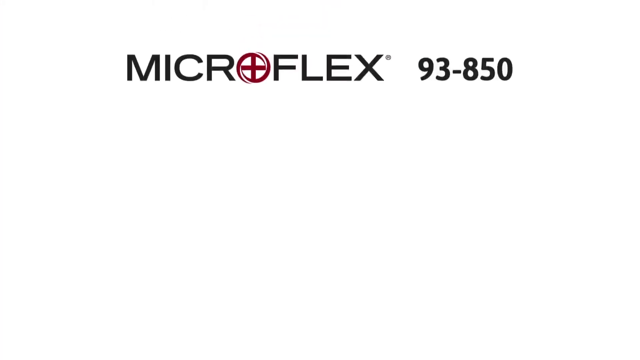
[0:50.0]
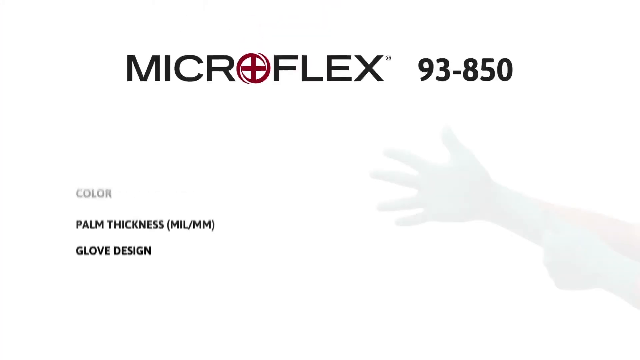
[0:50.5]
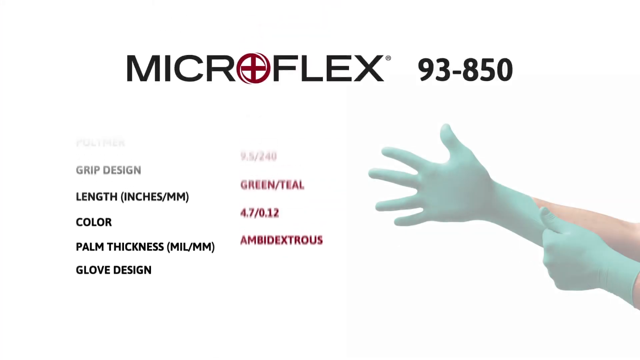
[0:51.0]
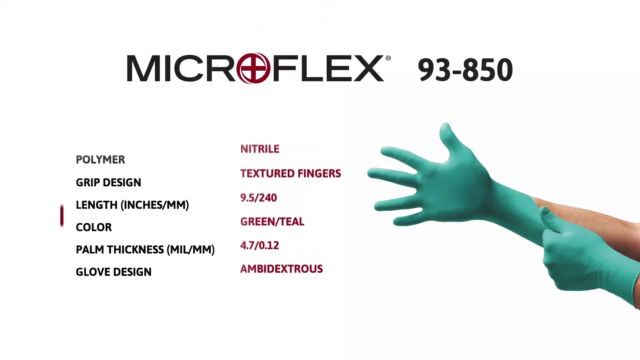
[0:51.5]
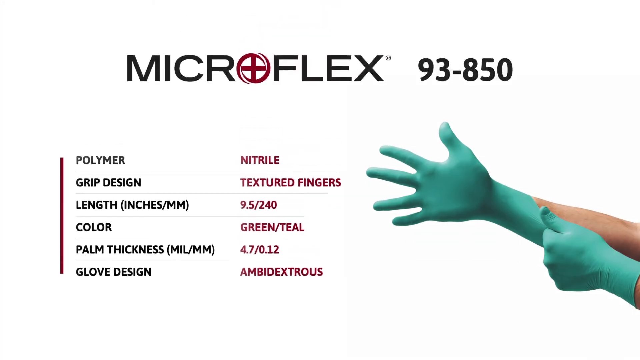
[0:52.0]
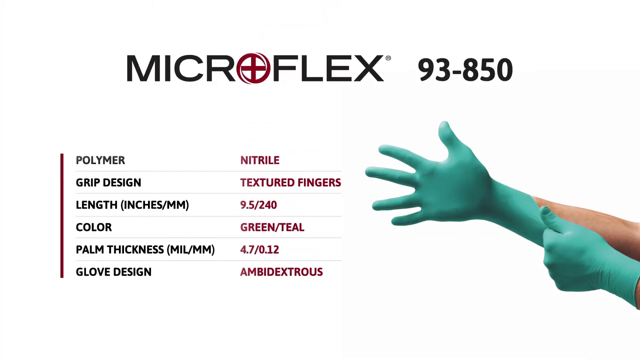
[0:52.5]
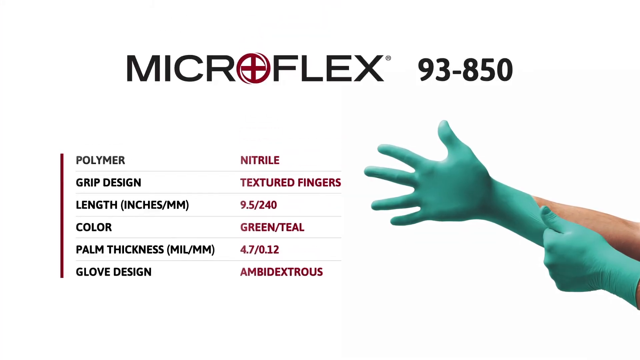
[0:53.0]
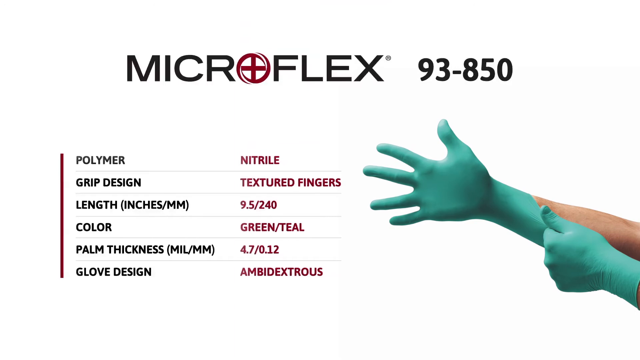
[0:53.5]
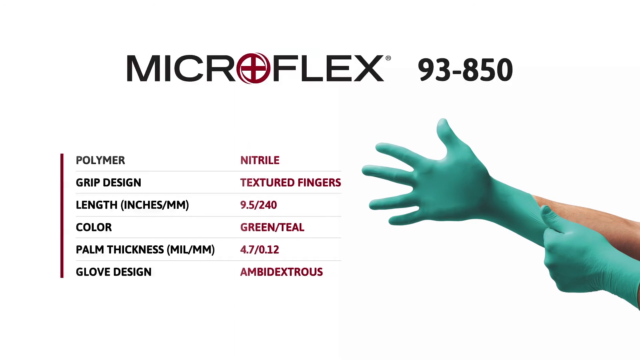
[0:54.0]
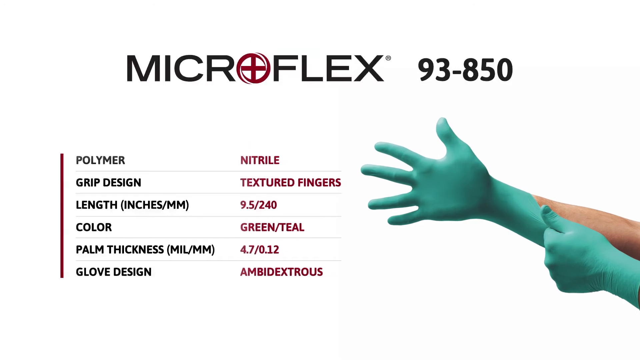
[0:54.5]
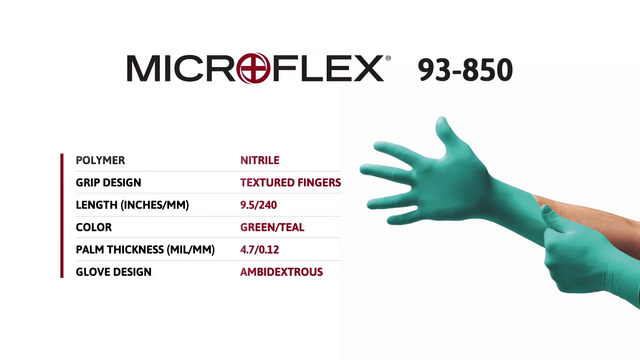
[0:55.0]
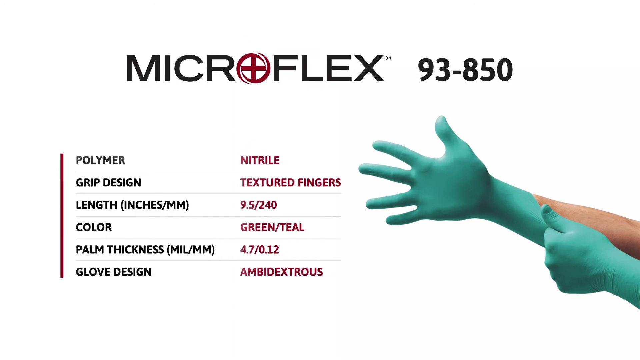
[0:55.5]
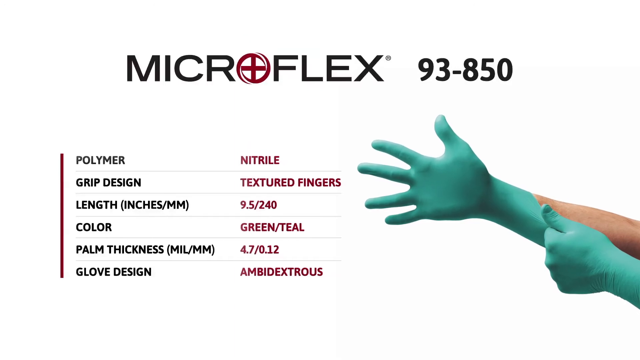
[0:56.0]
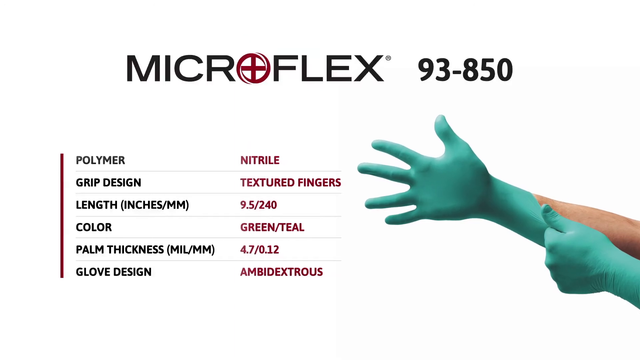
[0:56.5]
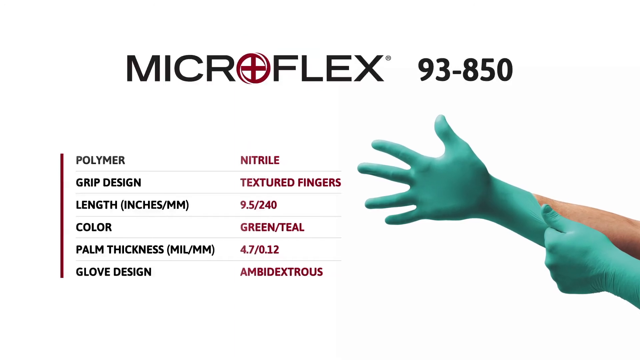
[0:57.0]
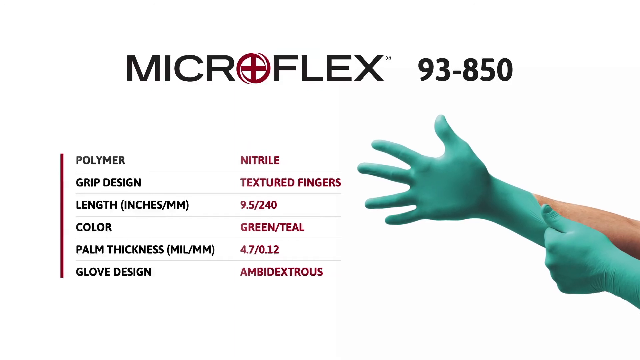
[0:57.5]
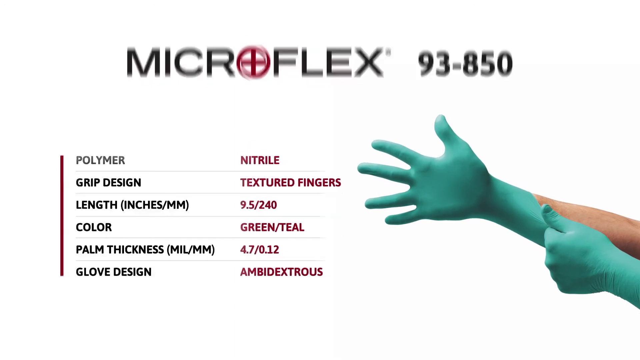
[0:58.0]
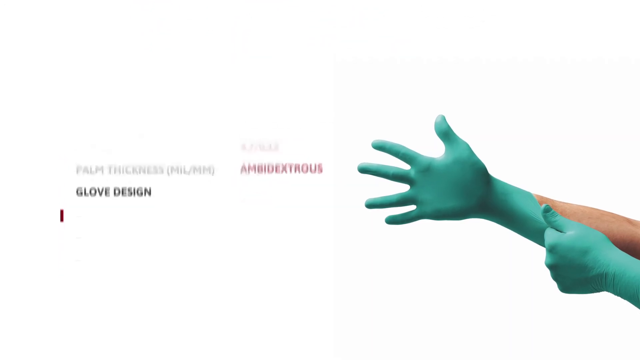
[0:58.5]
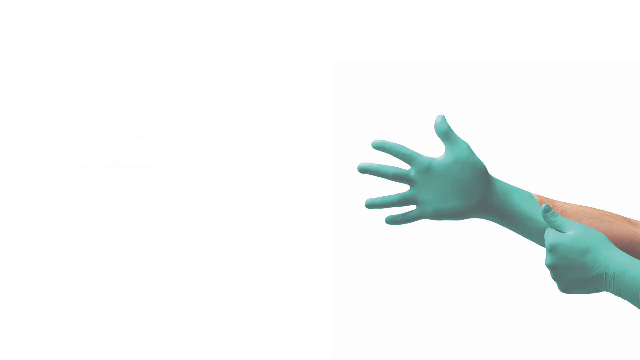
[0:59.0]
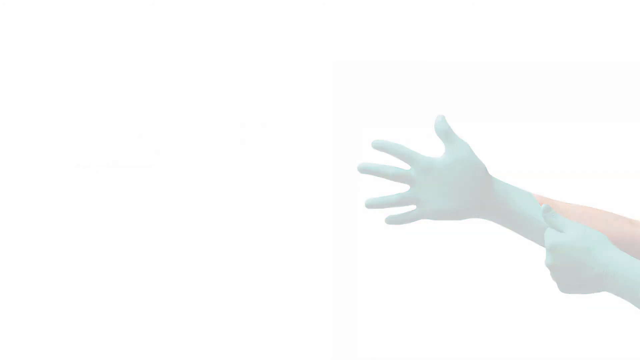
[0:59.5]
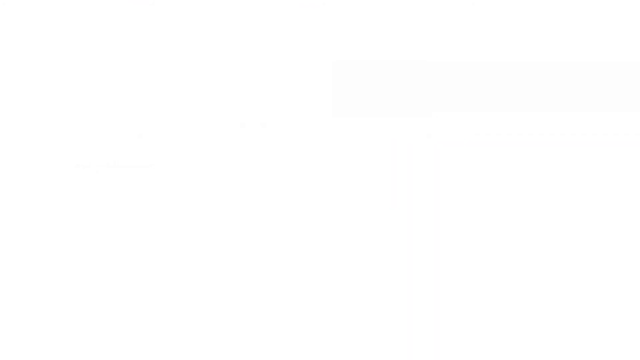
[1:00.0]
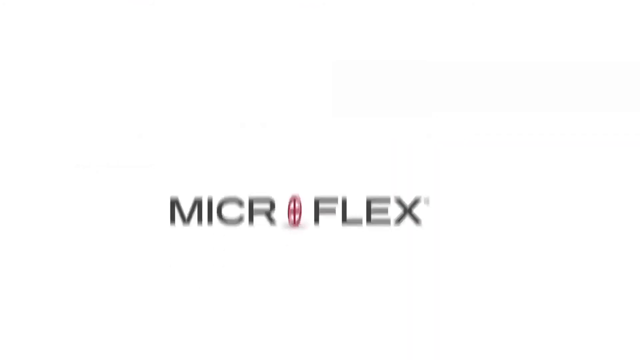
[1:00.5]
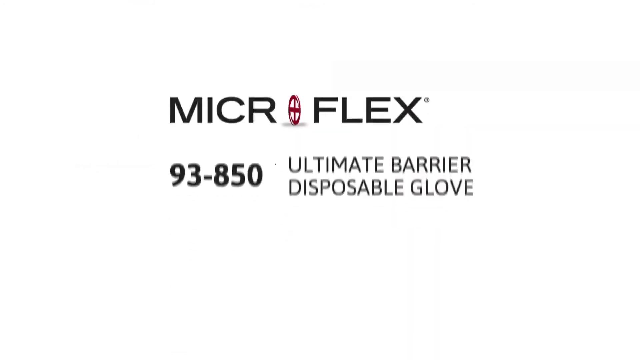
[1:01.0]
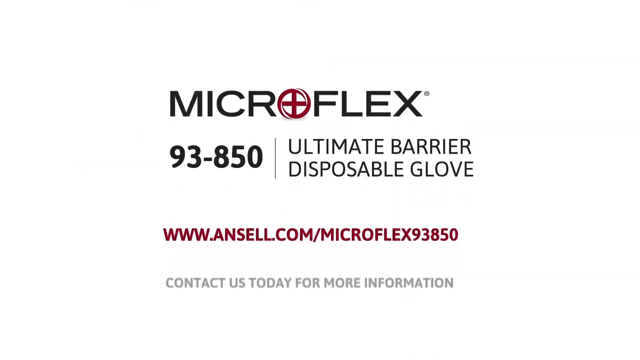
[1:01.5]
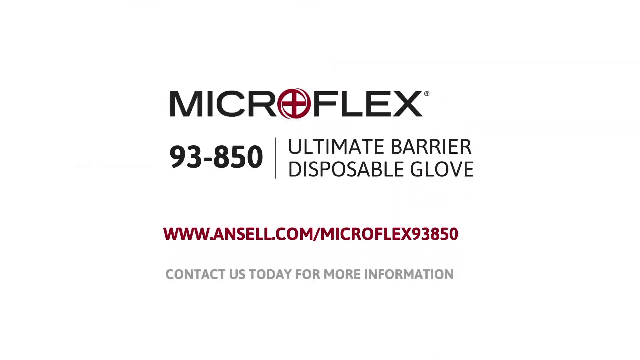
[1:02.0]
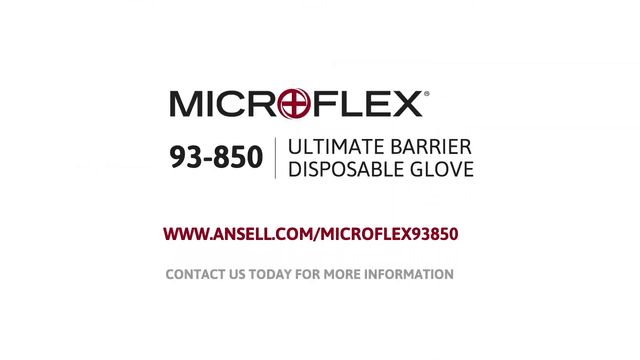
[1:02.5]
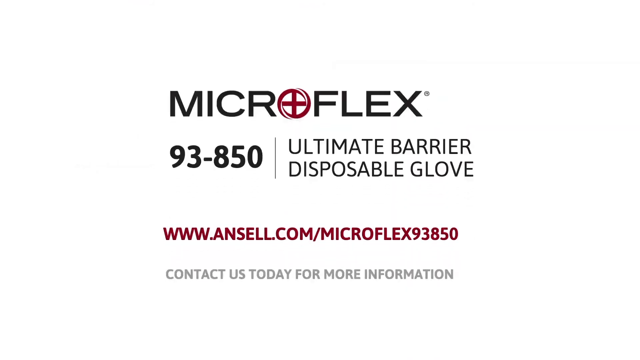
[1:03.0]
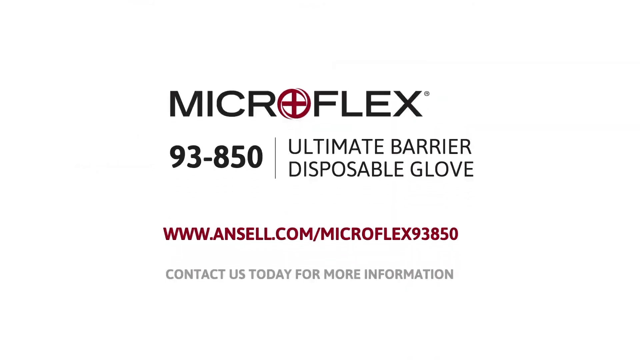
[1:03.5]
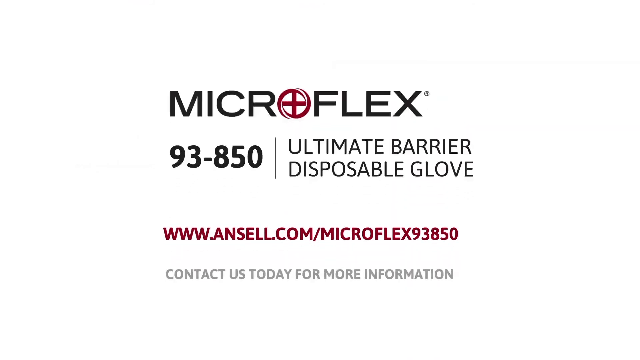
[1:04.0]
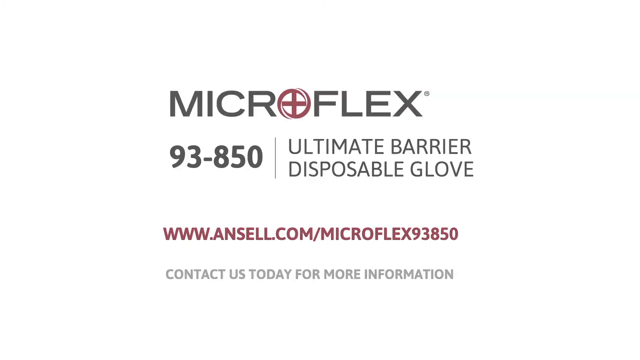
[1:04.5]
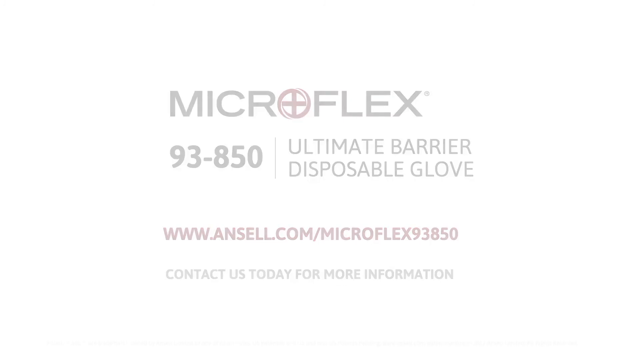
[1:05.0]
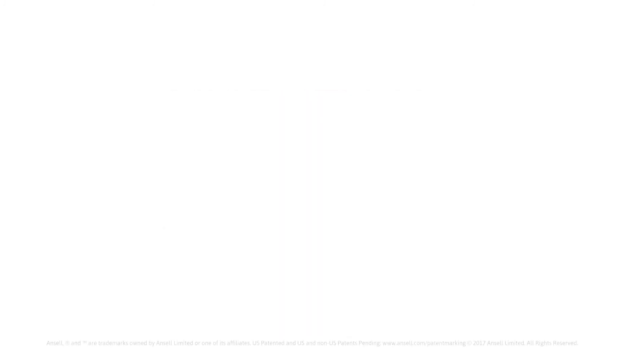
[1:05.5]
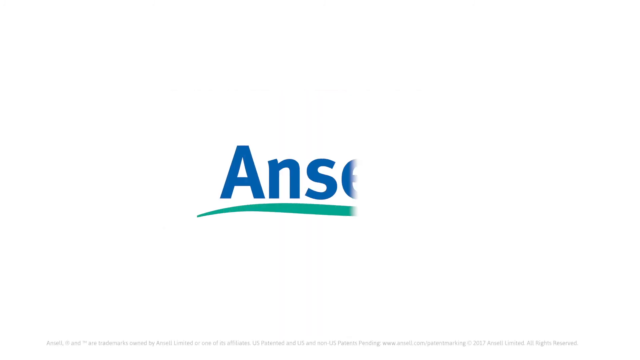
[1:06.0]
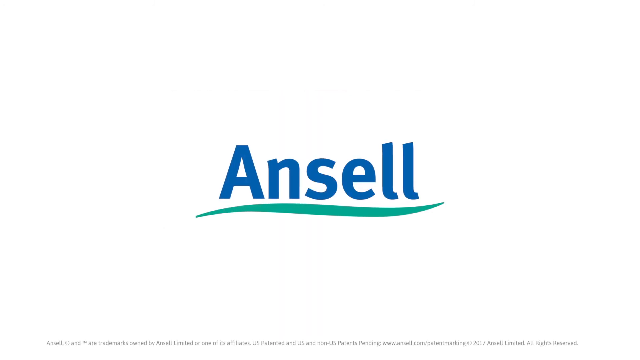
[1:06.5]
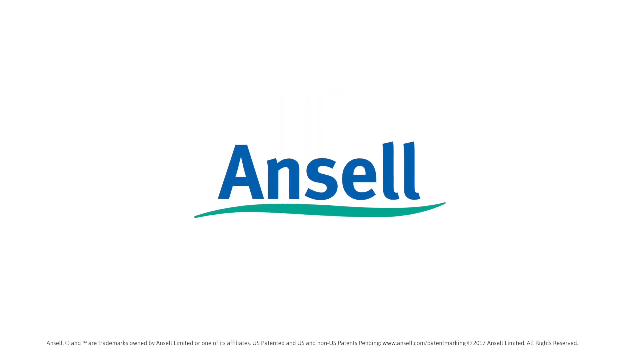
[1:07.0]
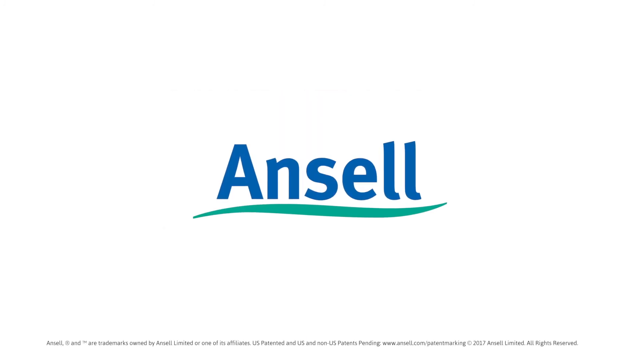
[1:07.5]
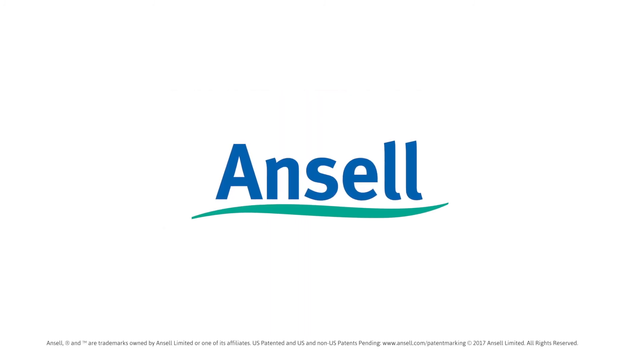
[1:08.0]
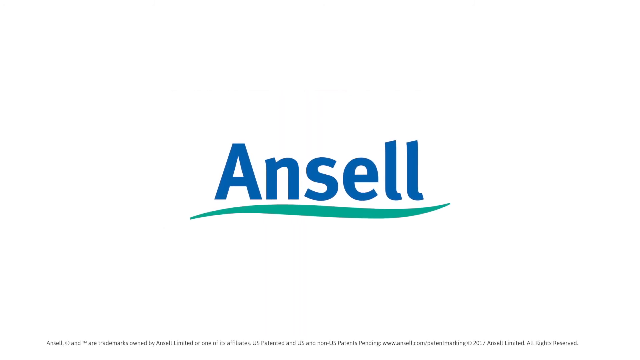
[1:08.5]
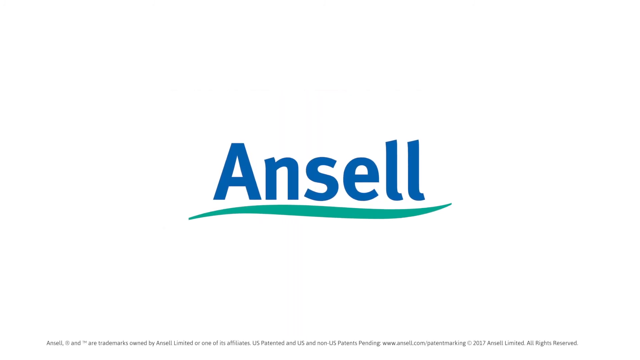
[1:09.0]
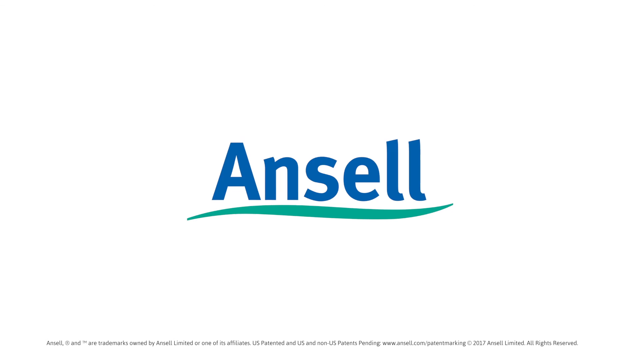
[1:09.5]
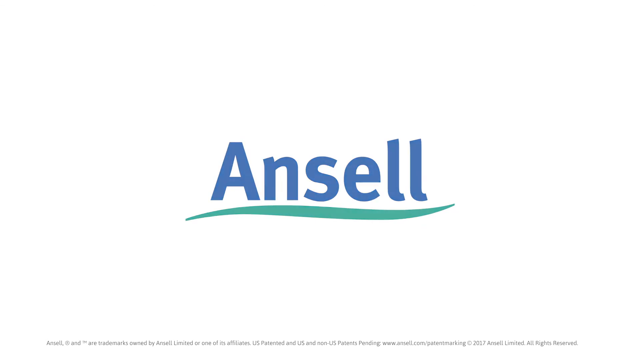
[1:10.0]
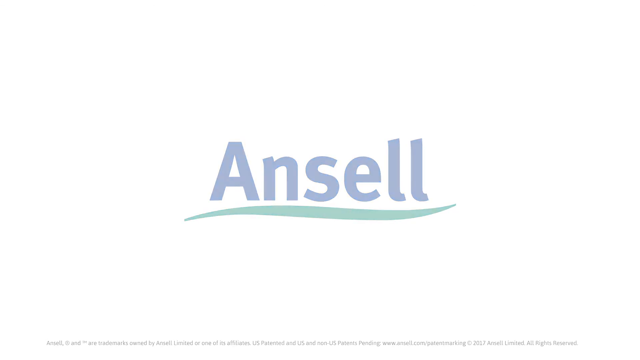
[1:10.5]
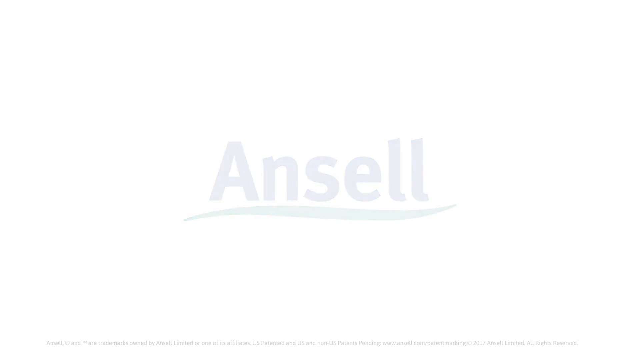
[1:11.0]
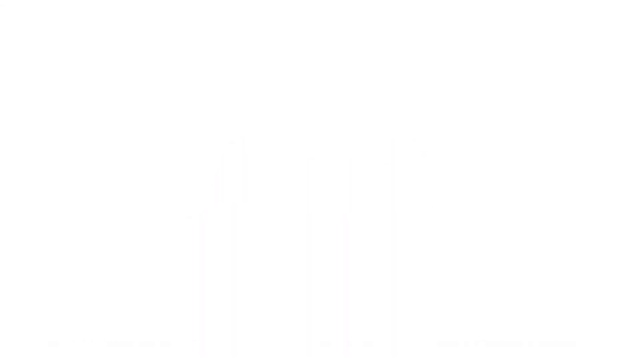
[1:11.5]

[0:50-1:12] The name Microflex appears with "93-850"; the O in Microflex is a red circle with a red cross in the center. Something almost like an ingredients list goes over the gloves' features while a person pulls one of the teal-blue gloves over their right hand, using the already fully gloved left hand to pull it on. The list reads "polymer" nitrile, "grip design" textured fingers, "length" inches by millimeters "9.5 - 240," "color" green or teal, "palm thickness" "4.7 - 0.12," and "glove design" ambidextrous. The first words in each group are in black lettering and the answers are in red lettering.